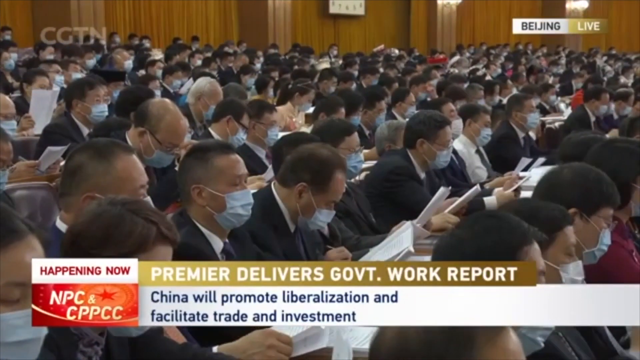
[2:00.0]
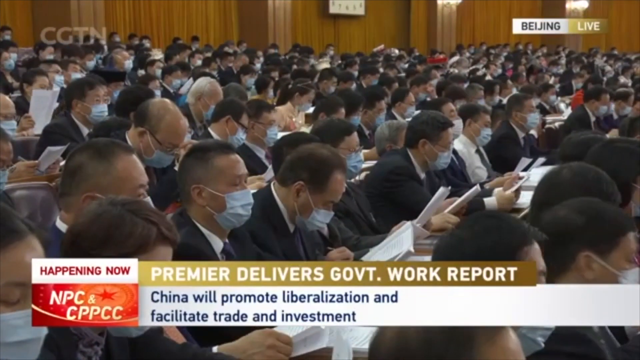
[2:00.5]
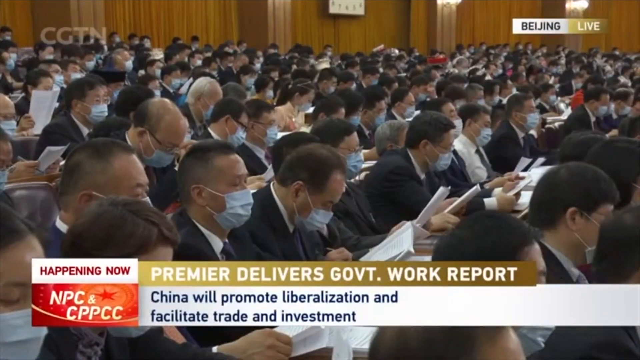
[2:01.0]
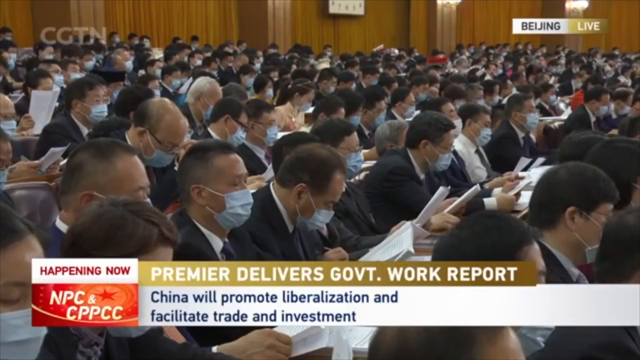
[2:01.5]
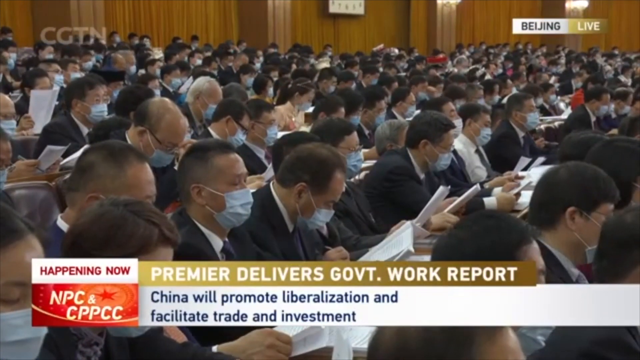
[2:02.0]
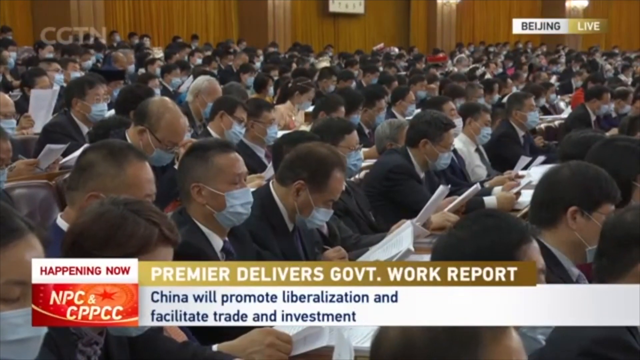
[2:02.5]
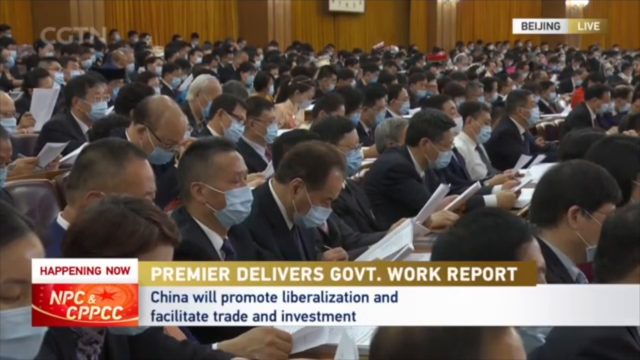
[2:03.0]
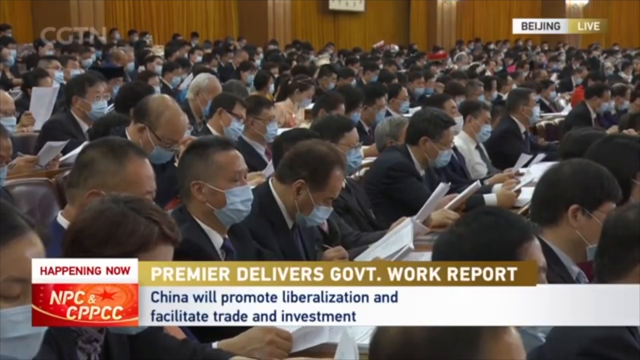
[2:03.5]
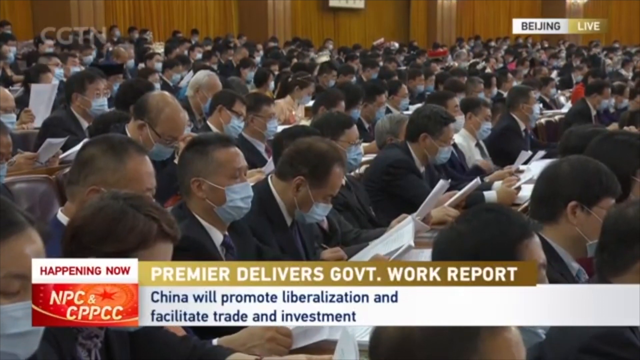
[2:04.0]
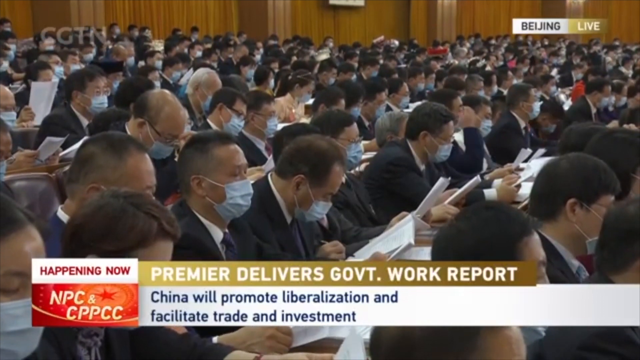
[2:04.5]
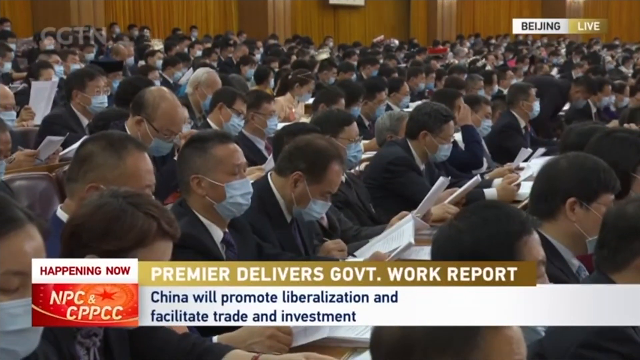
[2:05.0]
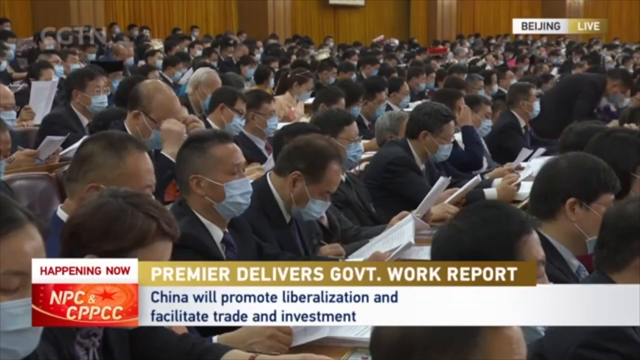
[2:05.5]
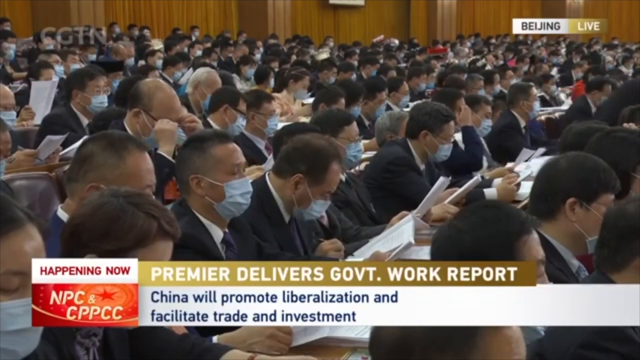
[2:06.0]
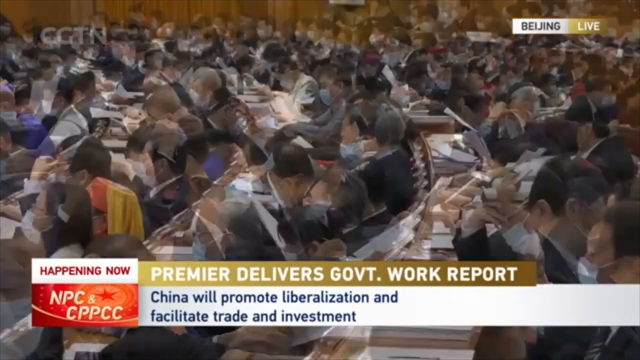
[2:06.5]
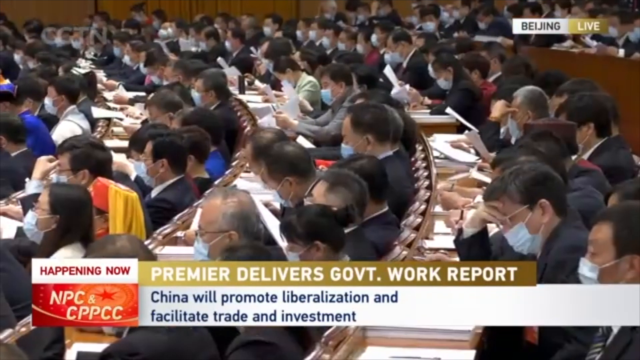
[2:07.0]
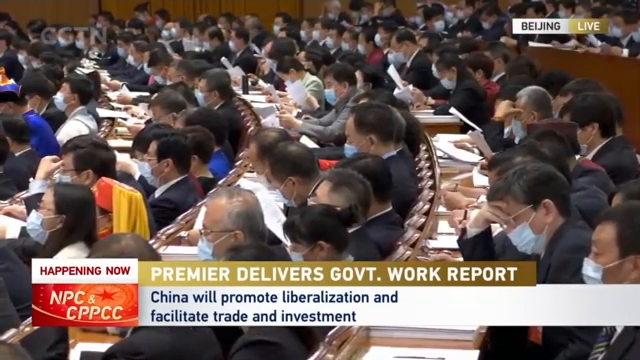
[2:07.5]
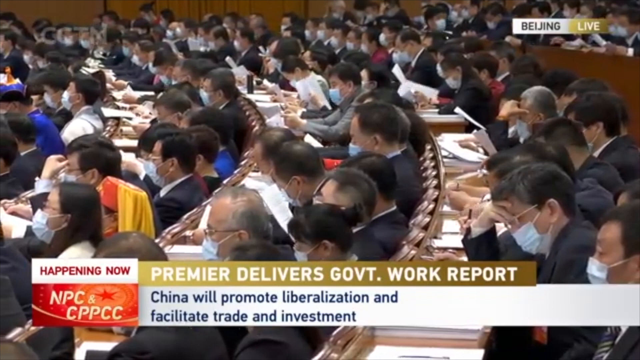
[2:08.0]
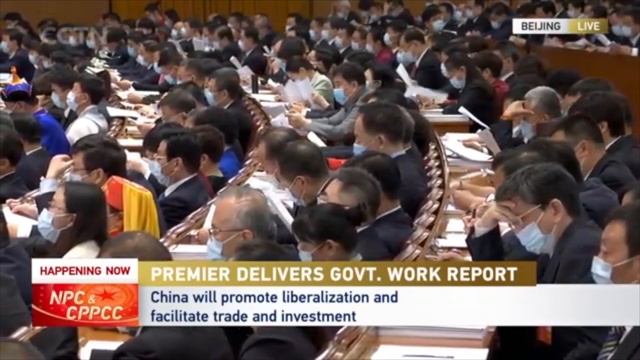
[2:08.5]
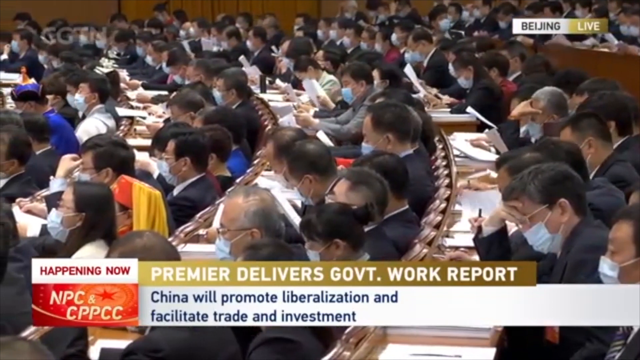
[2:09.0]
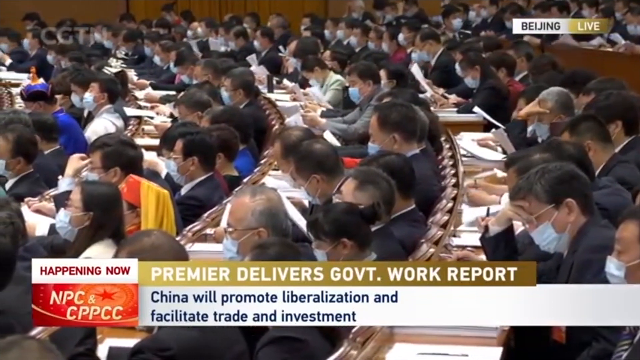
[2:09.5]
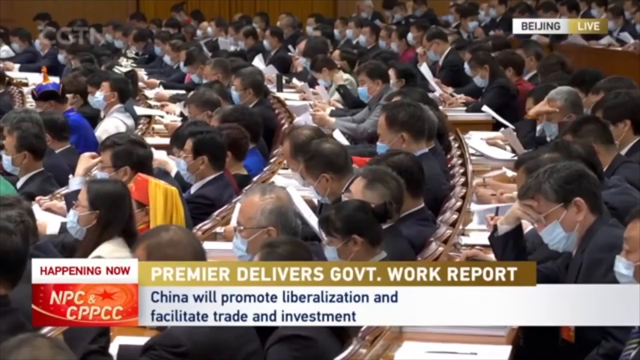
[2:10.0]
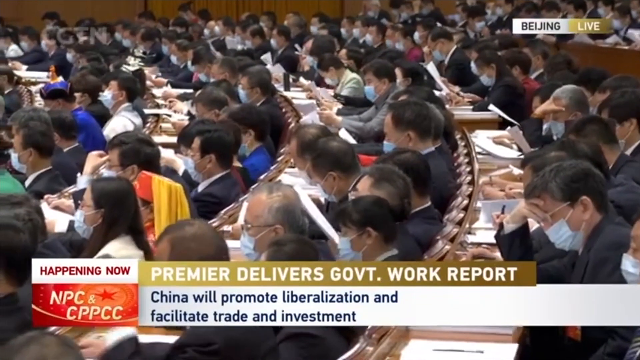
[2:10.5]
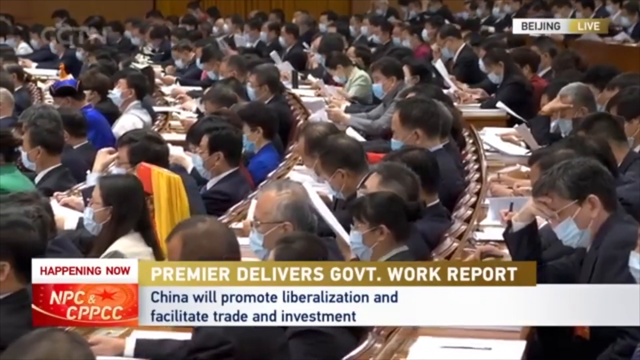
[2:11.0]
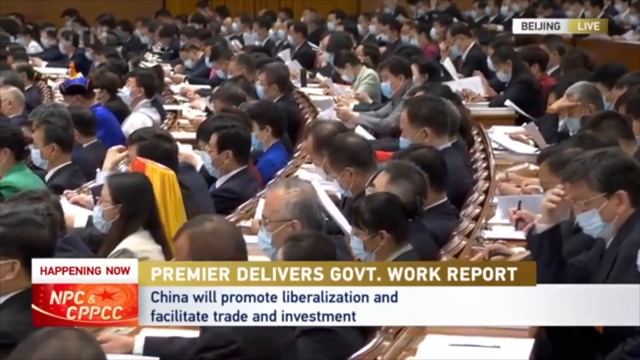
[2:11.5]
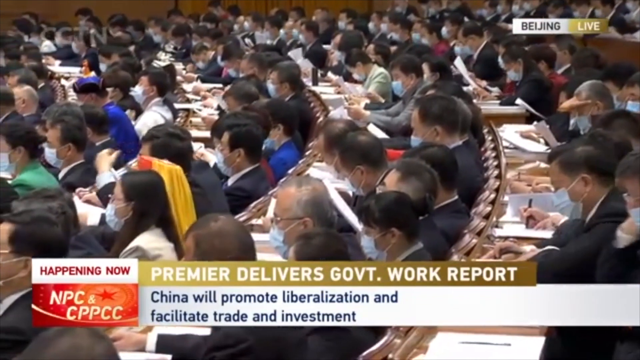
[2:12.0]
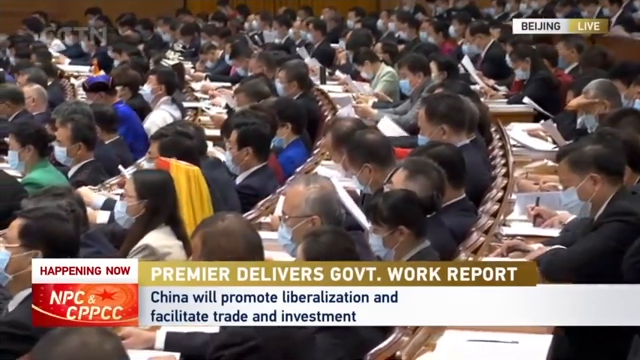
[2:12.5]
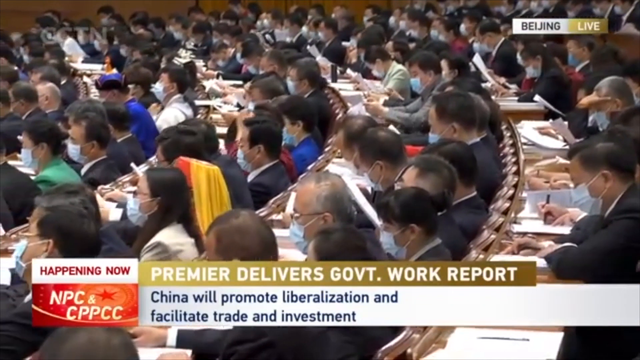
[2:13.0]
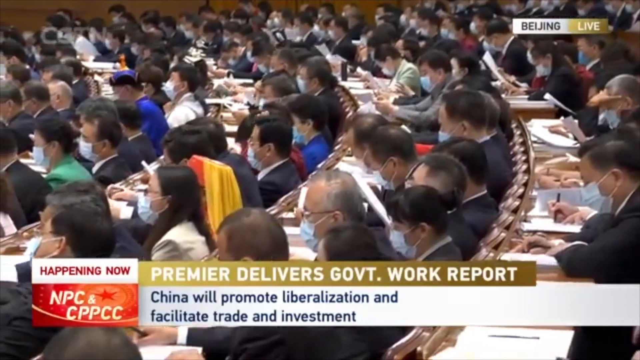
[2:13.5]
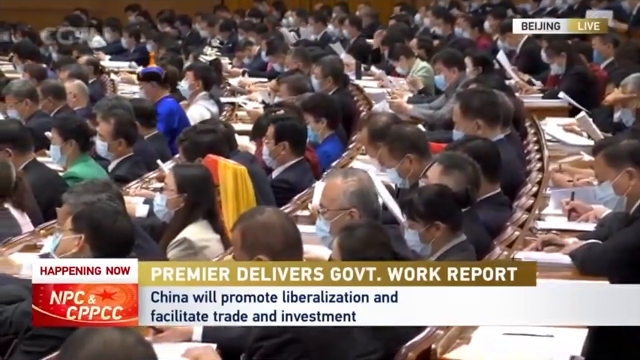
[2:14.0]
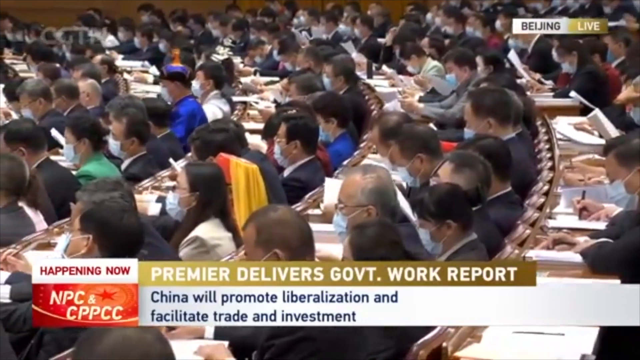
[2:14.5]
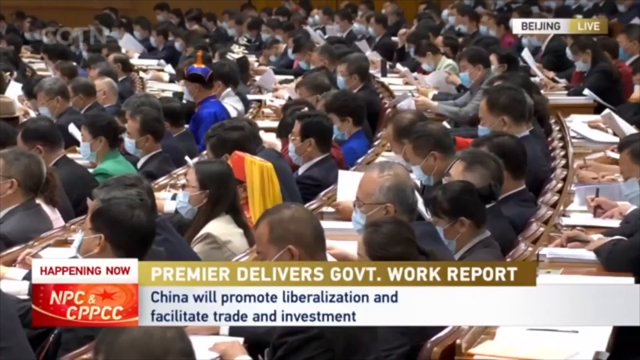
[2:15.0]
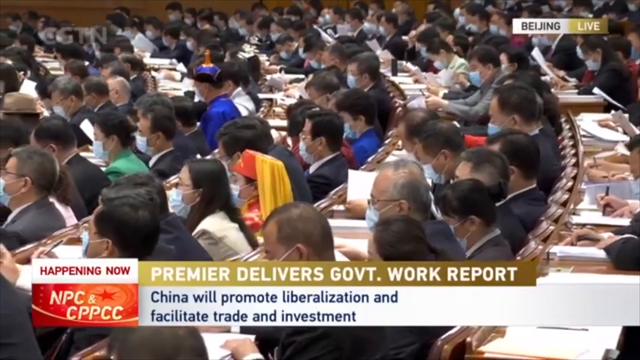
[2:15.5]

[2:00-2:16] The audience, still in masks, looks intently at the paperwork presented to them. Another angle shows the audience viewing the paperwork from the other side of the aisle, panning from the back of the audience toward the front. A lady wearing a yellow-style headdress stands out as very different from what everybody else in the audience is wearing. There are very few colors, and everybody seems to be wearing the same thing, with masks on. Most of the people have the same style of haircut and the same hair color. The title below still reads "Premier delivers government work report", with "China will promote liberalization and facilitate trade and investment" below it.